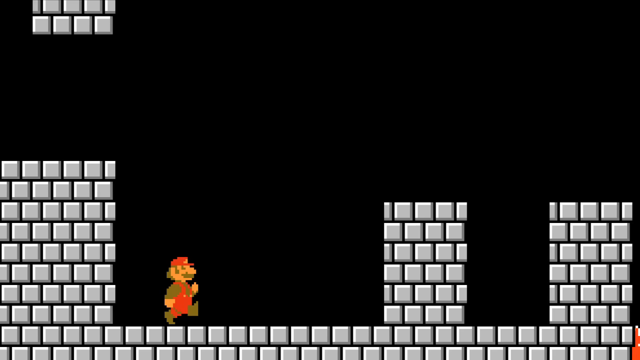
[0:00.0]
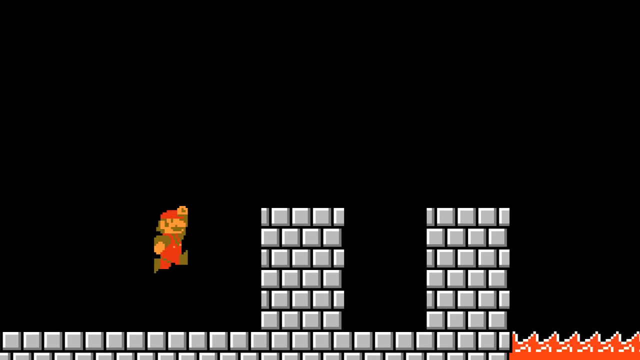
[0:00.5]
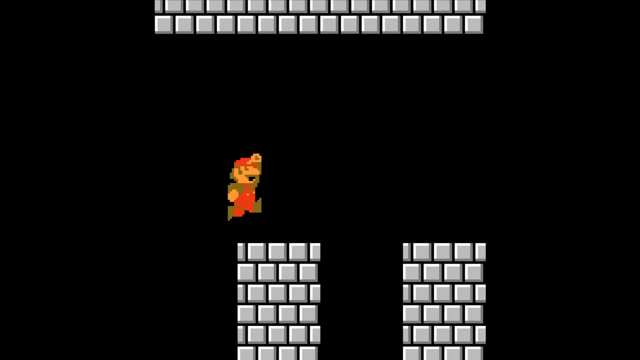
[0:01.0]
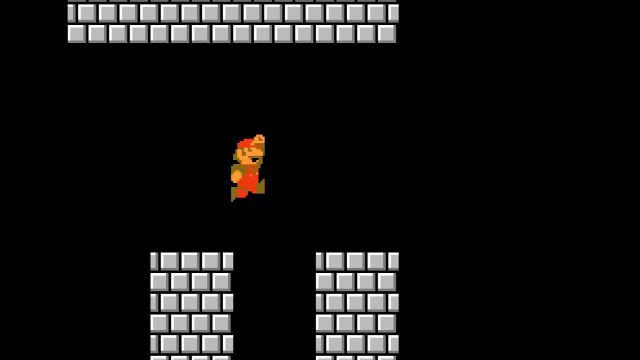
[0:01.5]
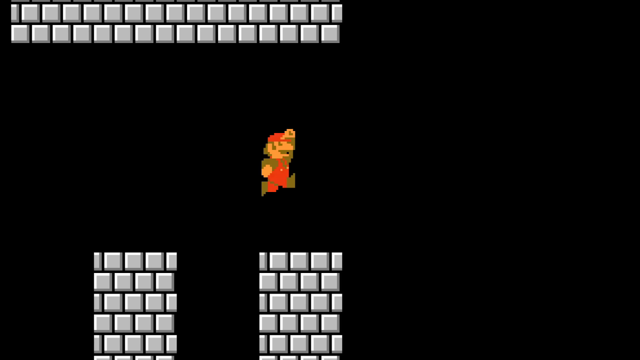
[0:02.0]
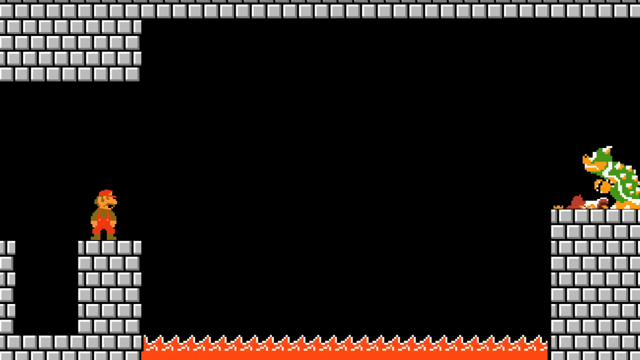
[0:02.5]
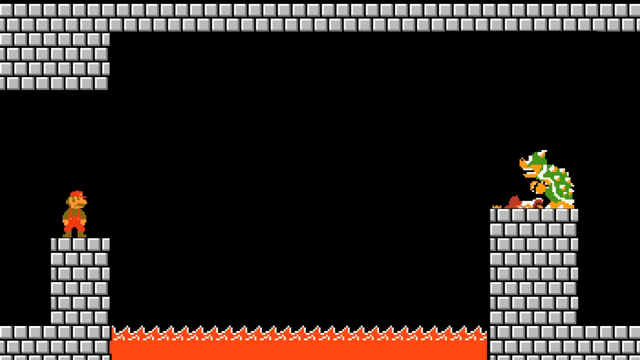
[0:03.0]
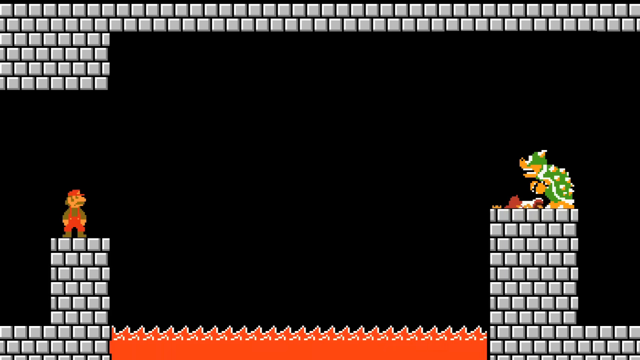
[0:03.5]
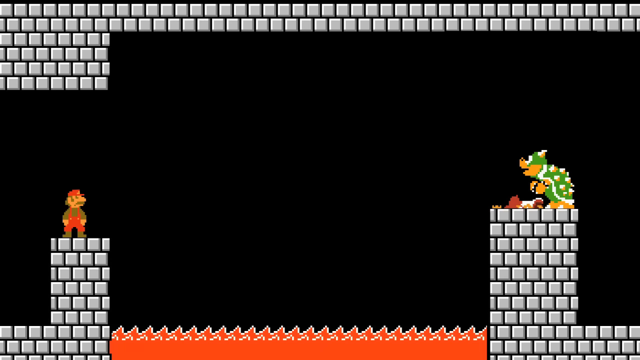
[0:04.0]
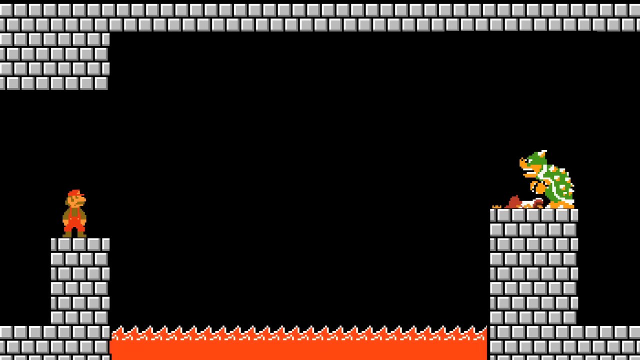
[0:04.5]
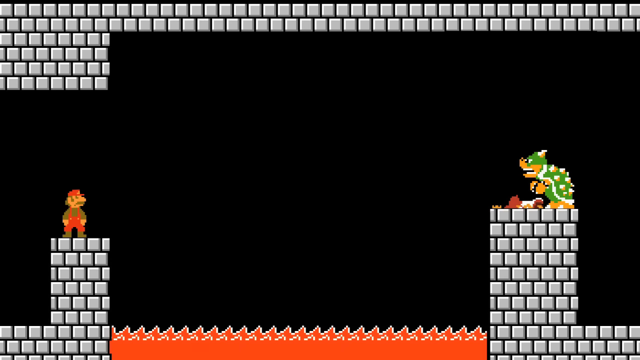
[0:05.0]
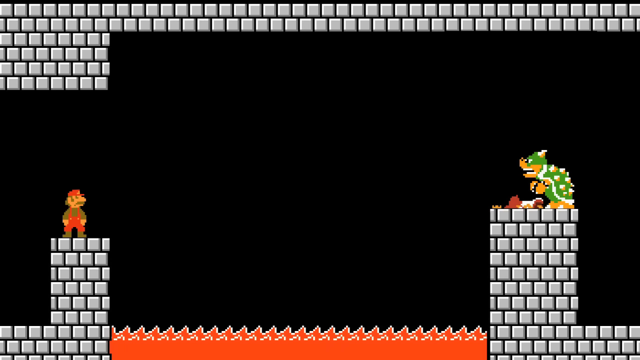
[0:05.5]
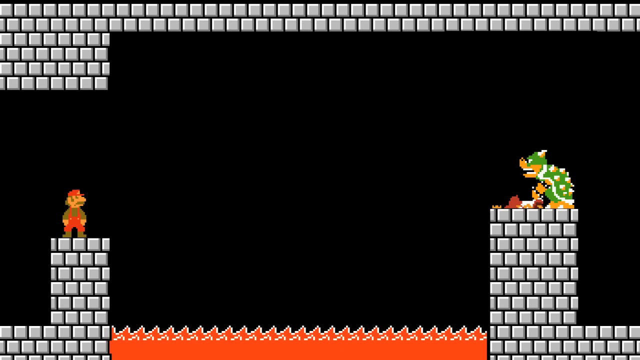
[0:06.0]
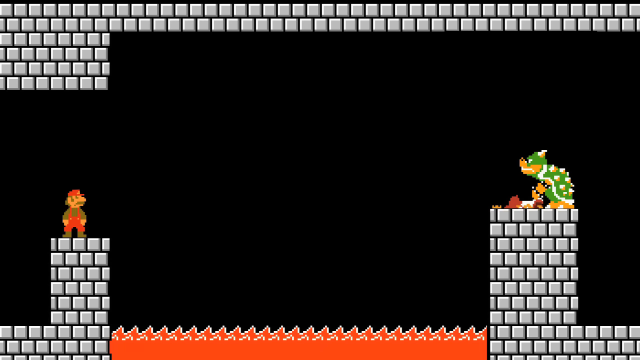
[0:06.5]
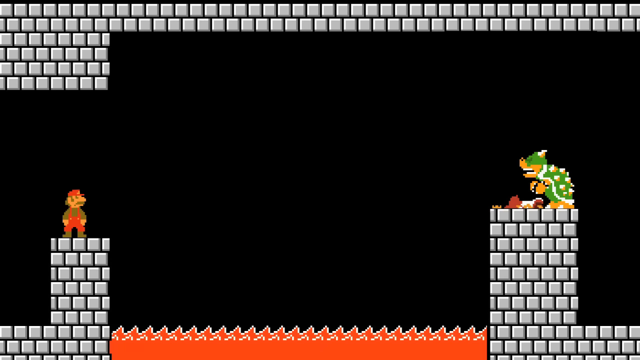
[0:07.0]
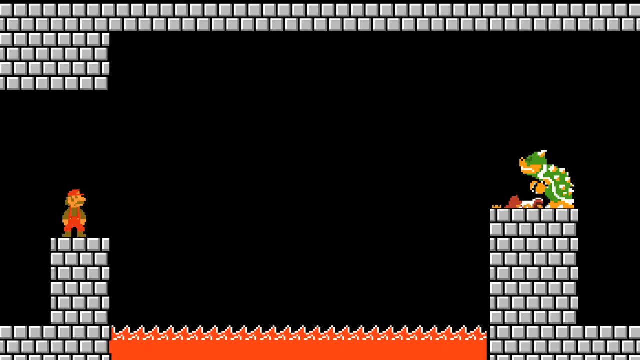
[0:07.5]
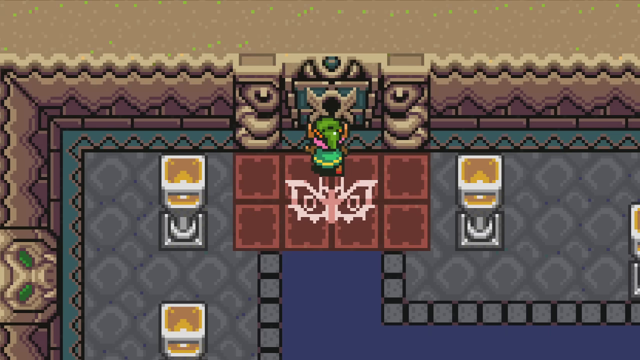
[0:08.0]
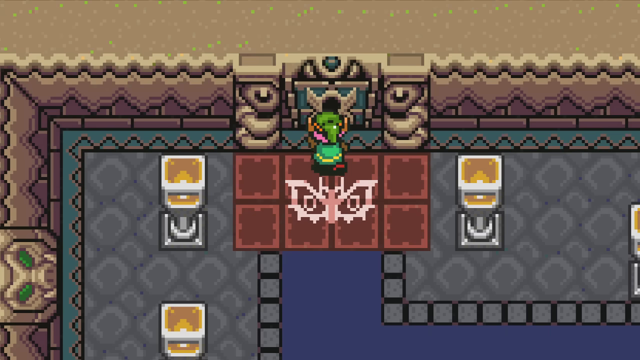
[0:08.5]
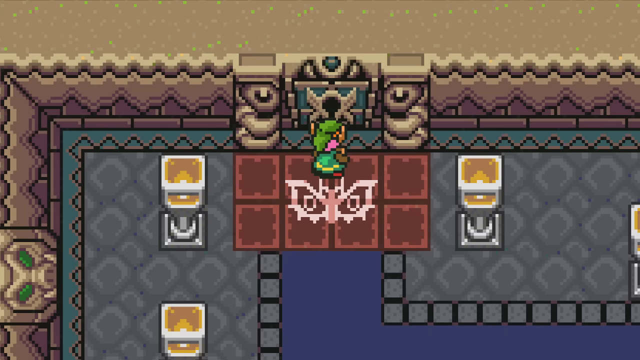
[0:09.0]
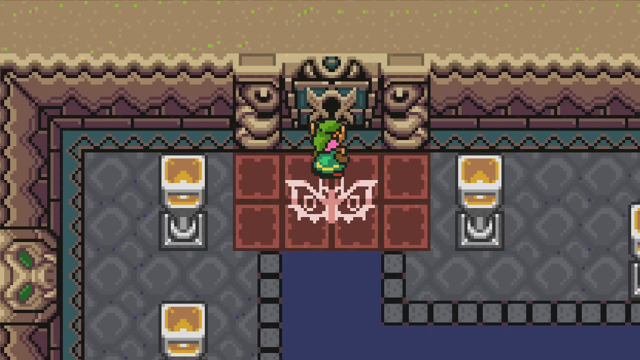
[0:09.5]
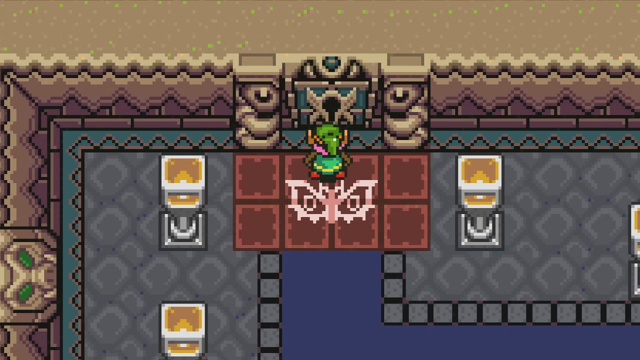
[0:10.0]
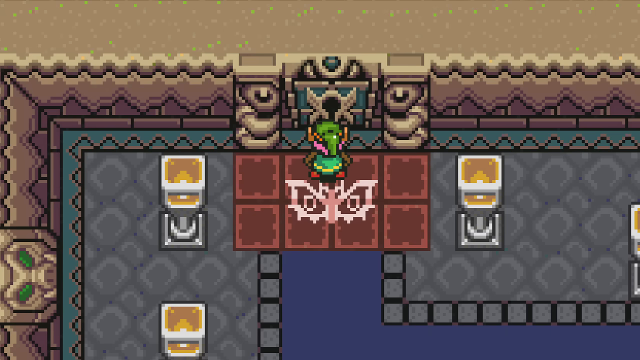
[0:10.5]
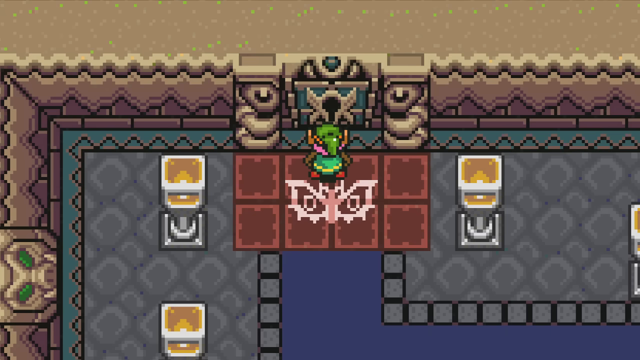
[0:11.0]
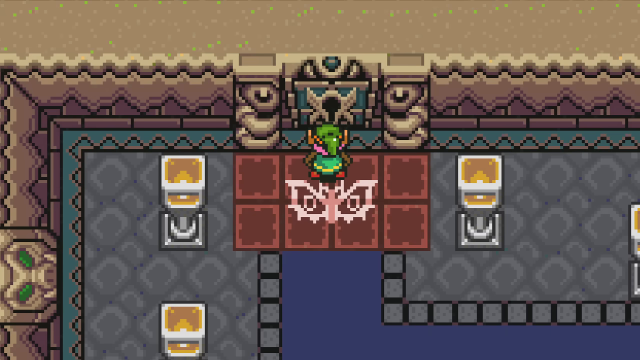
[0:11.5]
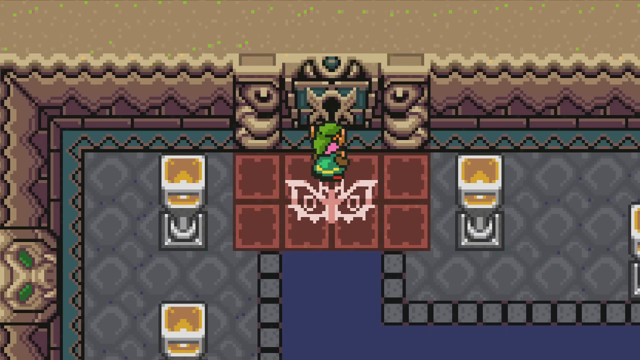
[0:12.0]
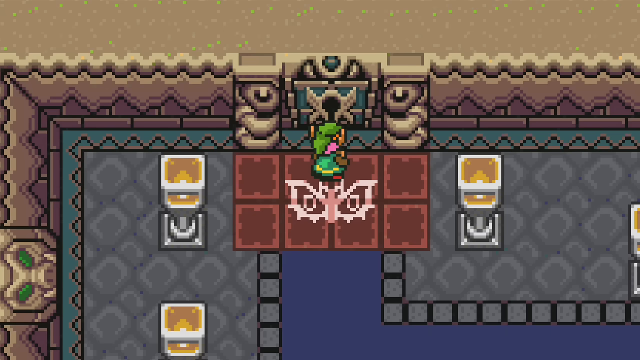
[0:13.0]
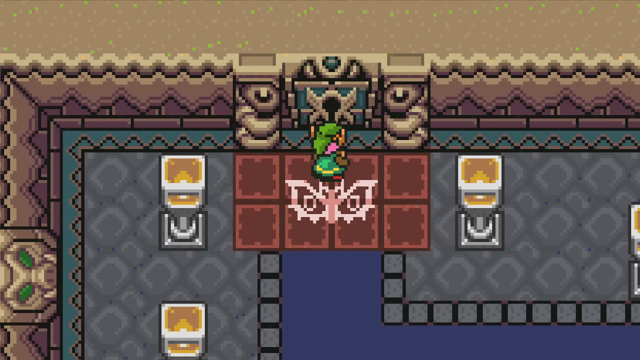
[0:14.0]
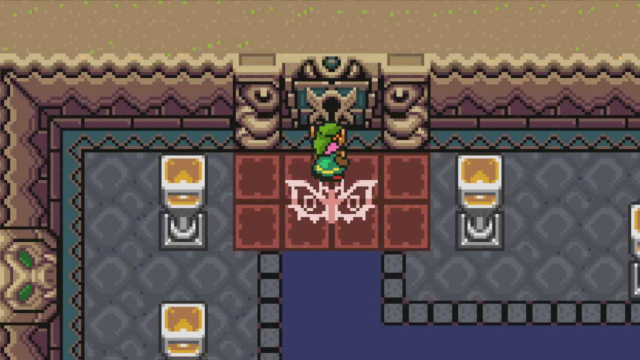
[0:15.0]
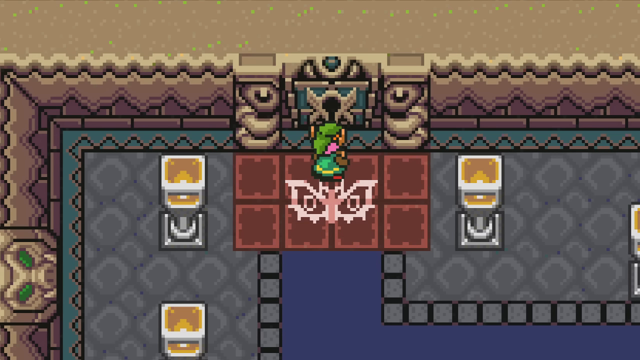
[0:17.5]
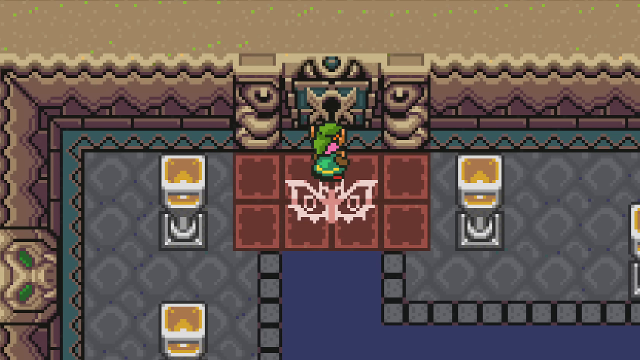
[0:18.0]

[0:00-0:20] A Super Mario Brothers game is being played. Mario, wearing a red and white jumpsuit, runs toward the right, jumping up and down on top of brick buildings. He stops when he sees a character on the far right side that looks to be Bowser. The video then shows a Zelda game being played. The Zelda character is standing in front of a door with a very big lock on it. Around the room there are several items, including a very big wall, statues and very big candle holders. The video is rectangular in shape and computer generated.